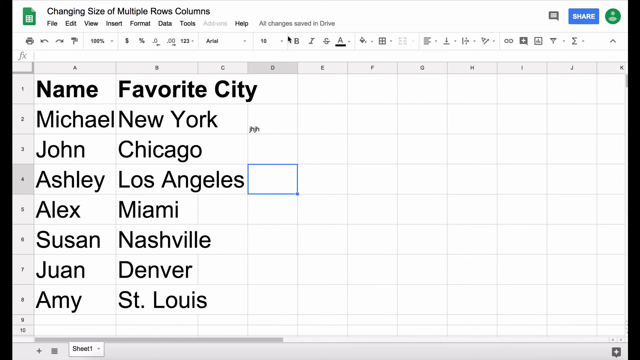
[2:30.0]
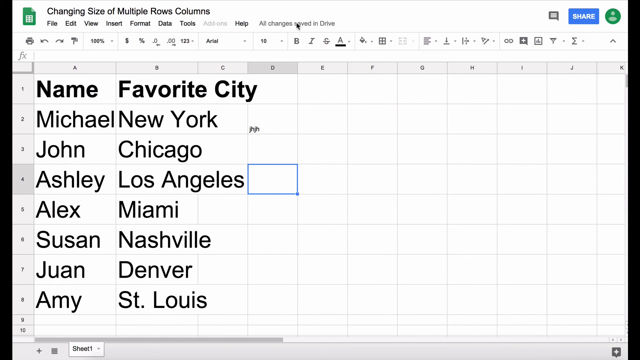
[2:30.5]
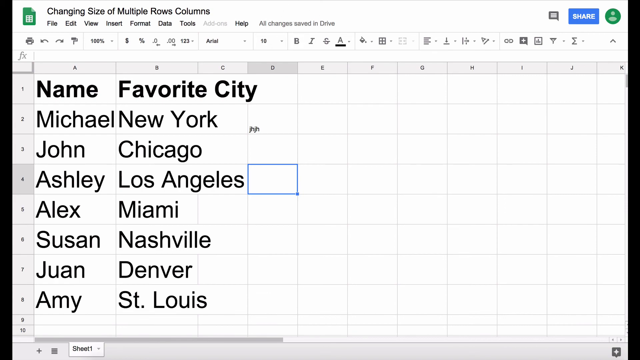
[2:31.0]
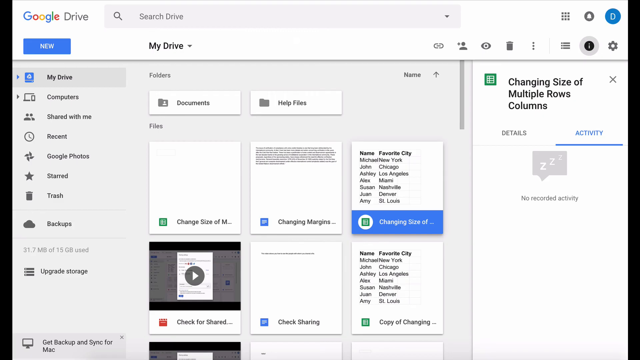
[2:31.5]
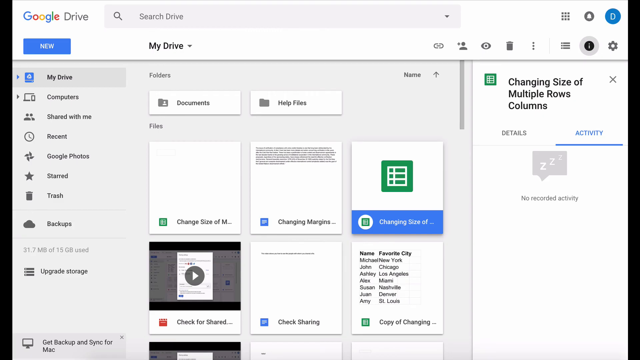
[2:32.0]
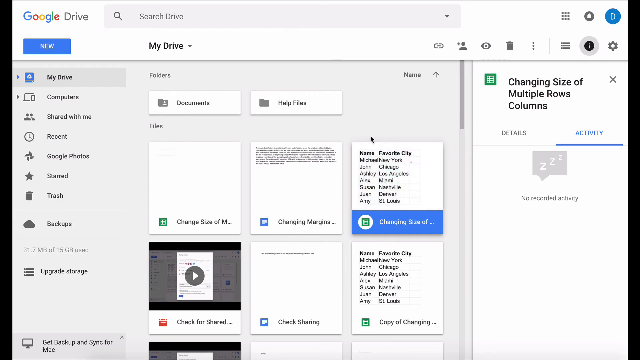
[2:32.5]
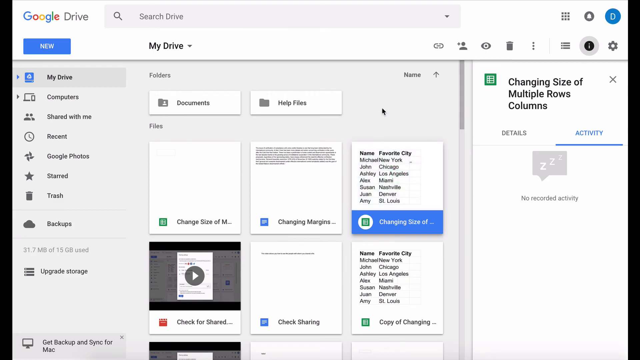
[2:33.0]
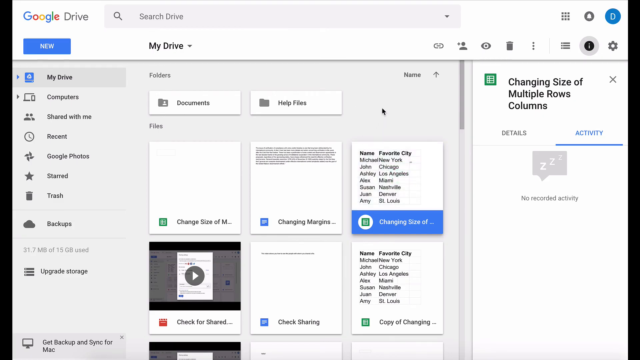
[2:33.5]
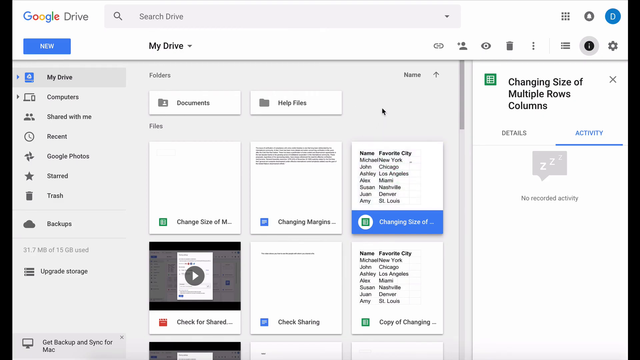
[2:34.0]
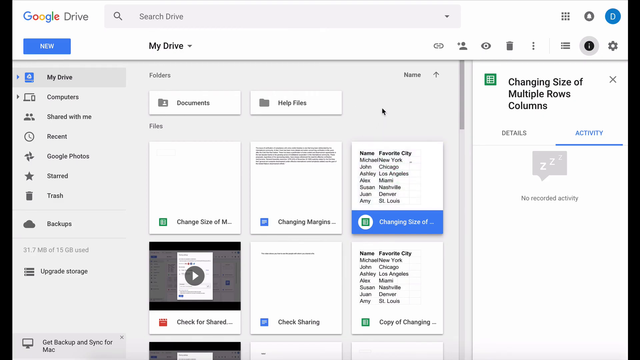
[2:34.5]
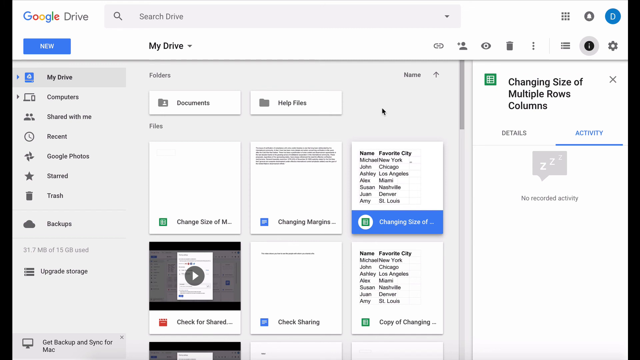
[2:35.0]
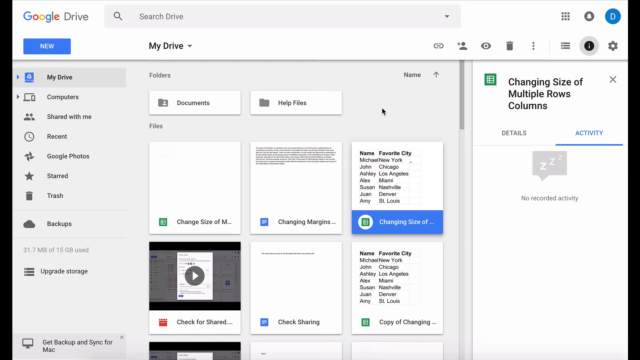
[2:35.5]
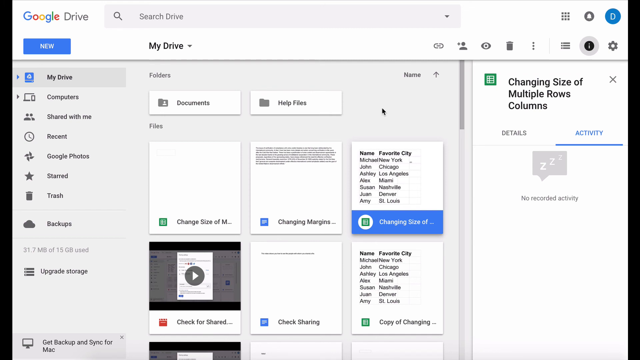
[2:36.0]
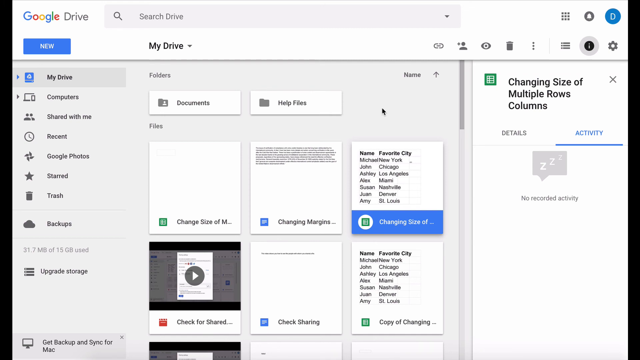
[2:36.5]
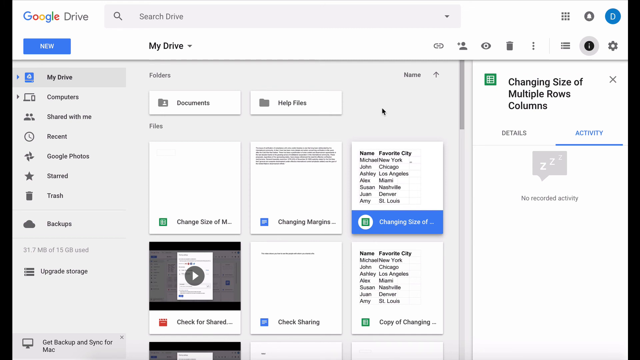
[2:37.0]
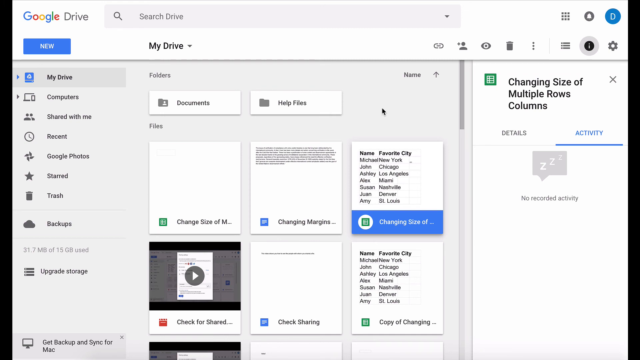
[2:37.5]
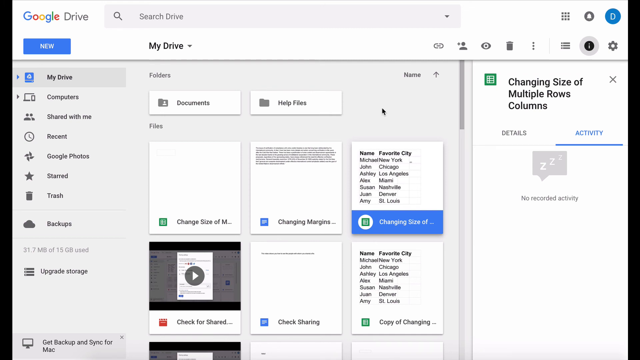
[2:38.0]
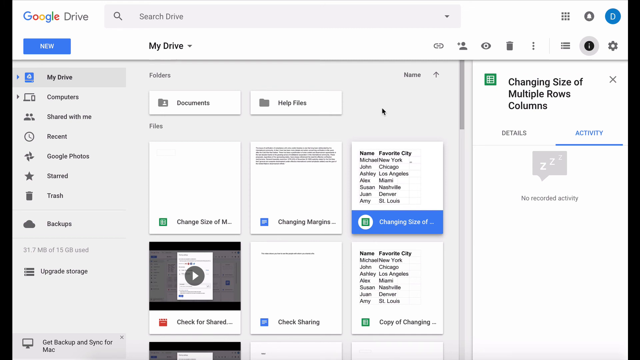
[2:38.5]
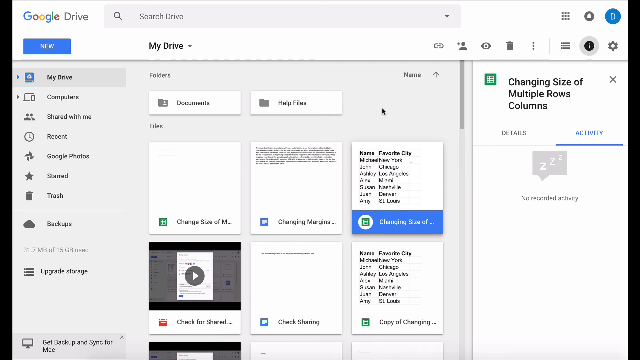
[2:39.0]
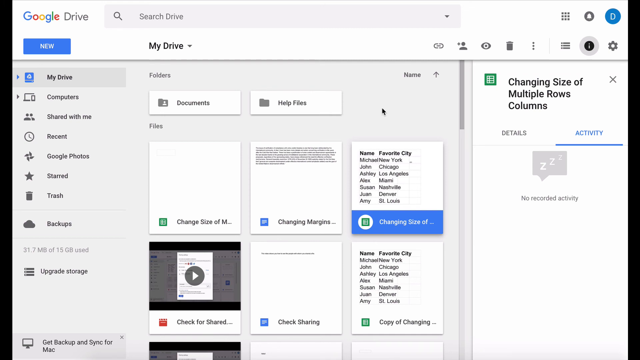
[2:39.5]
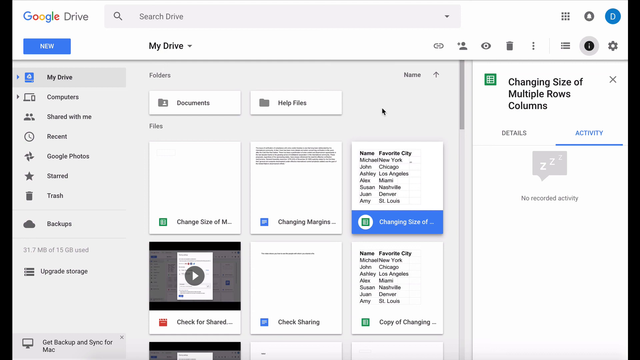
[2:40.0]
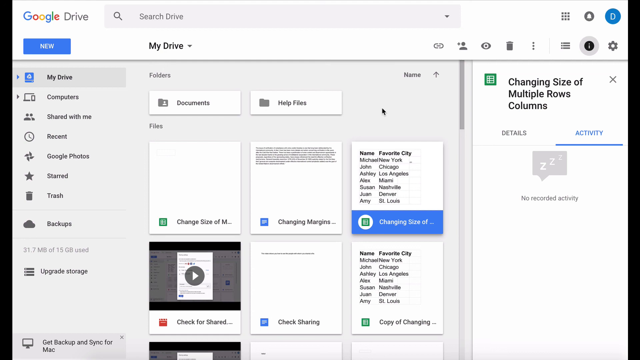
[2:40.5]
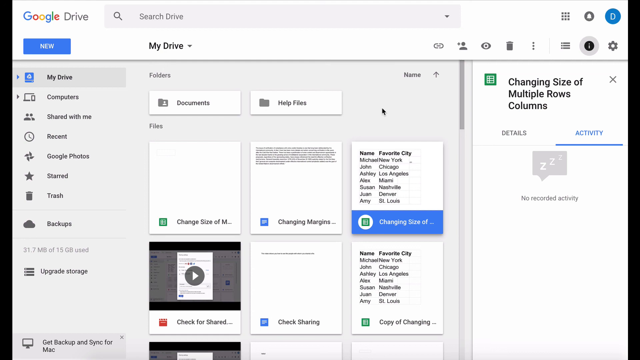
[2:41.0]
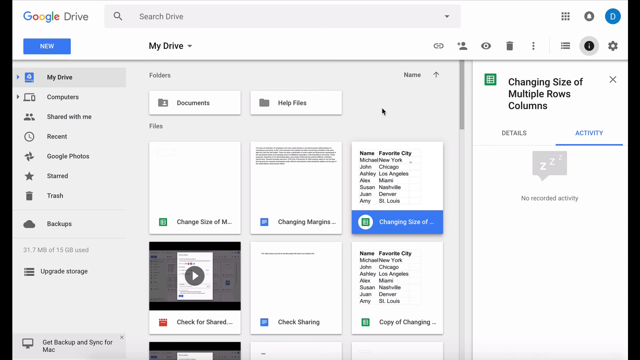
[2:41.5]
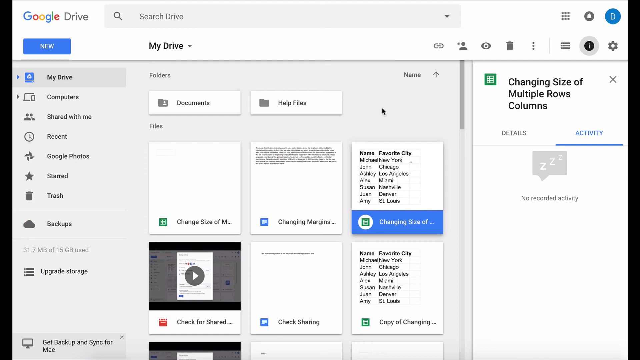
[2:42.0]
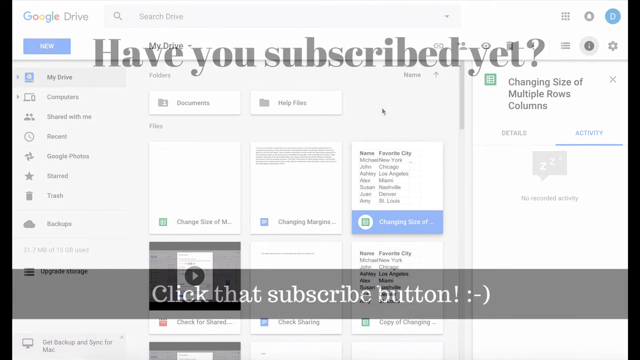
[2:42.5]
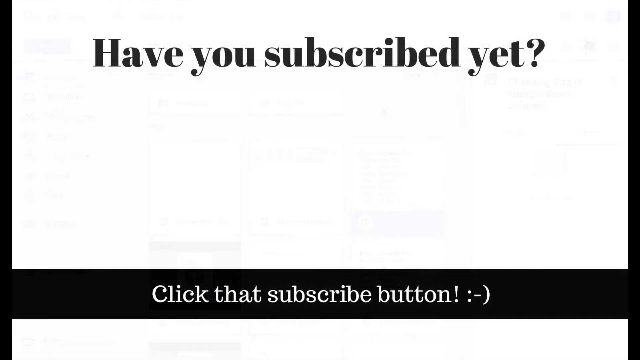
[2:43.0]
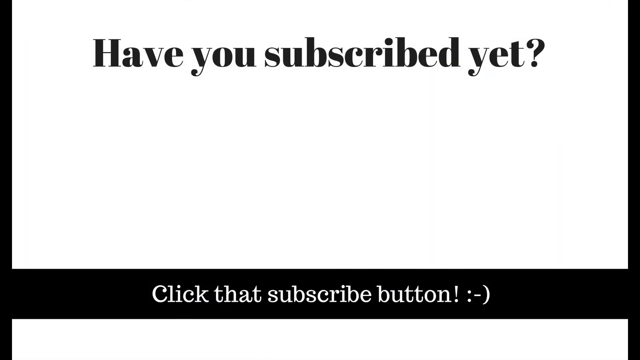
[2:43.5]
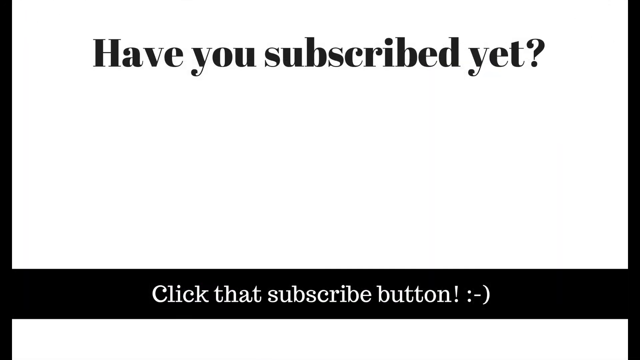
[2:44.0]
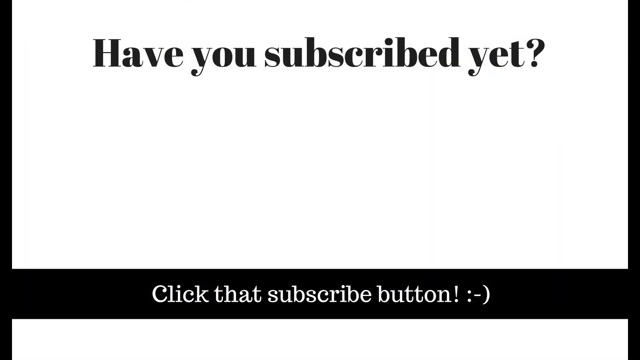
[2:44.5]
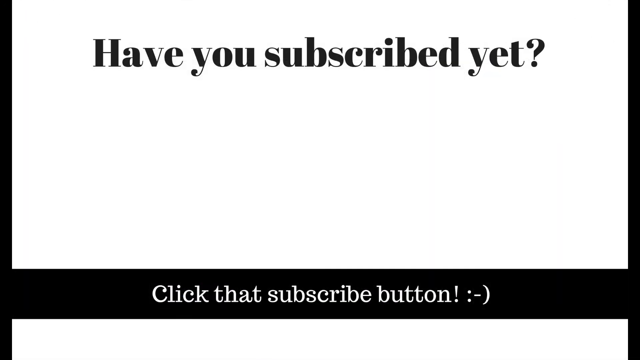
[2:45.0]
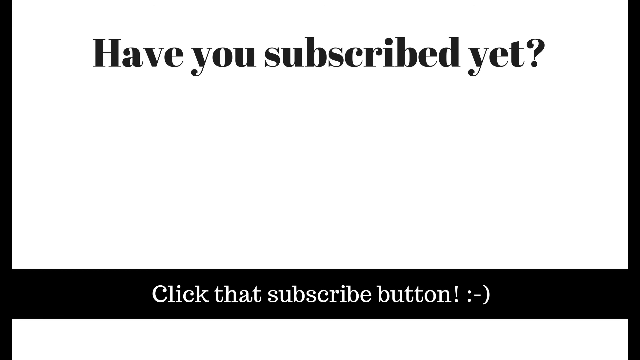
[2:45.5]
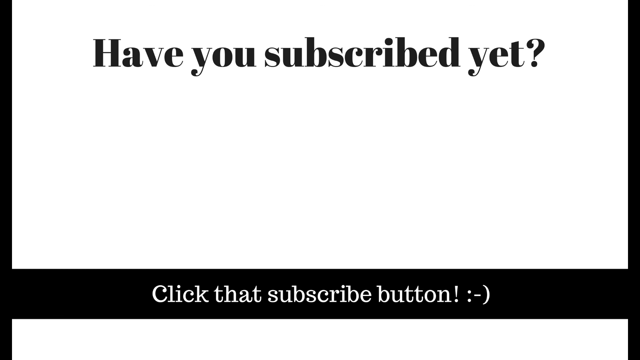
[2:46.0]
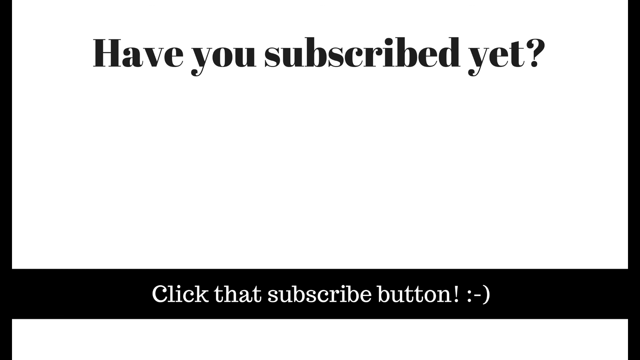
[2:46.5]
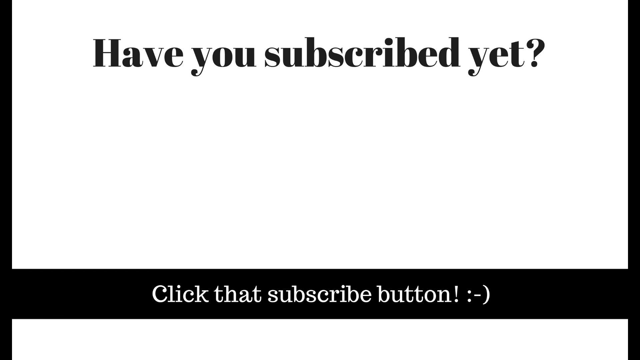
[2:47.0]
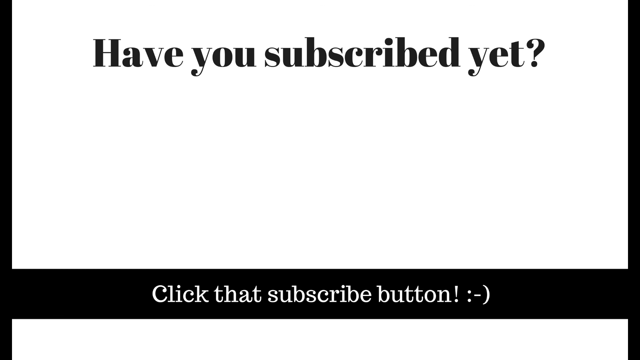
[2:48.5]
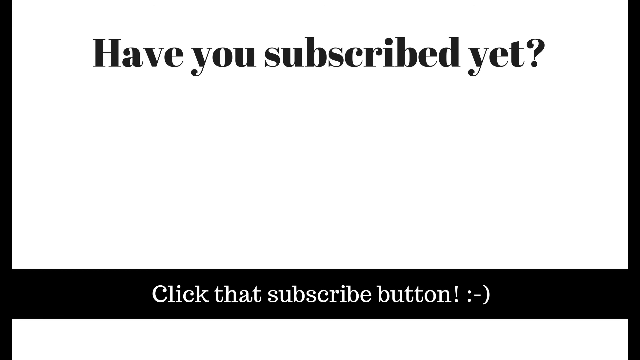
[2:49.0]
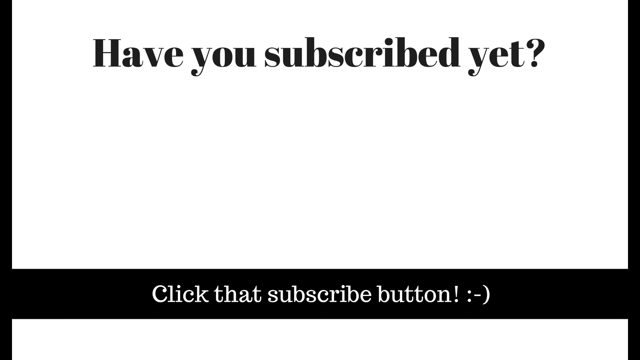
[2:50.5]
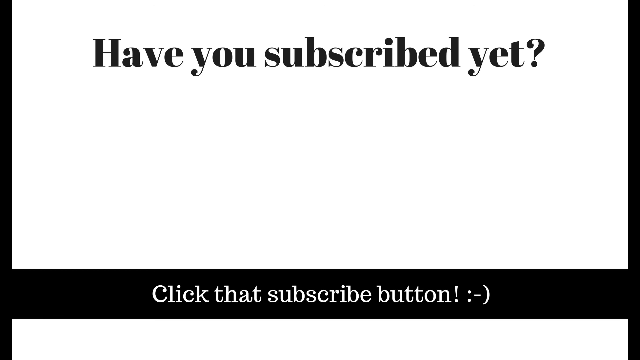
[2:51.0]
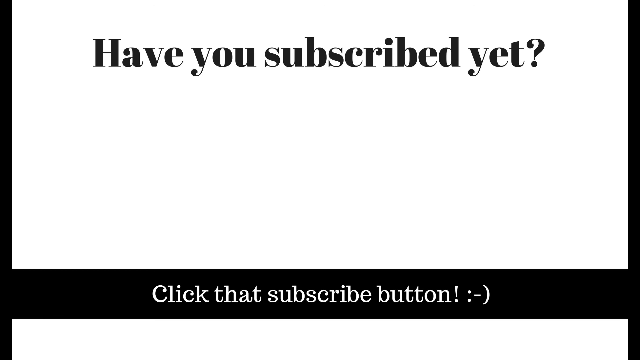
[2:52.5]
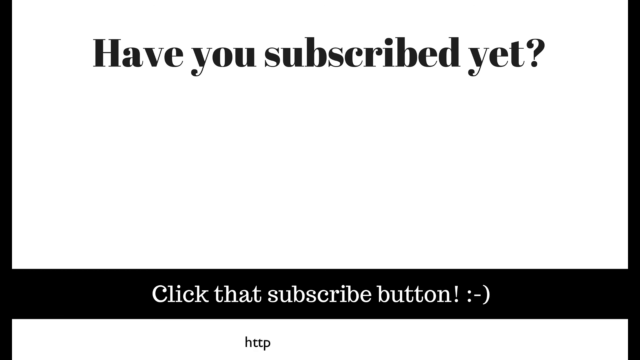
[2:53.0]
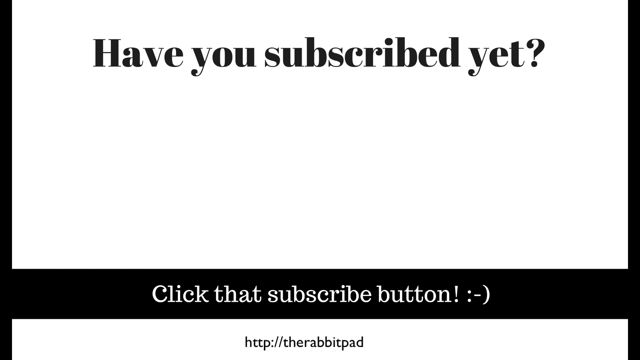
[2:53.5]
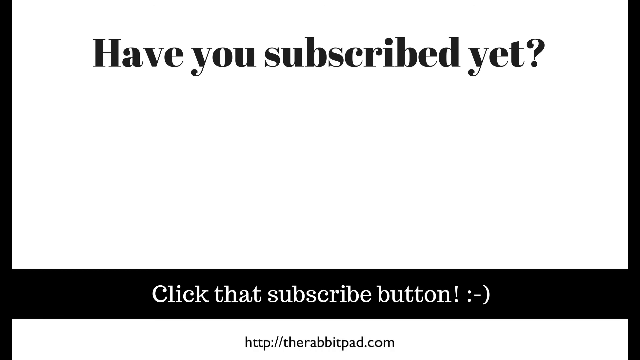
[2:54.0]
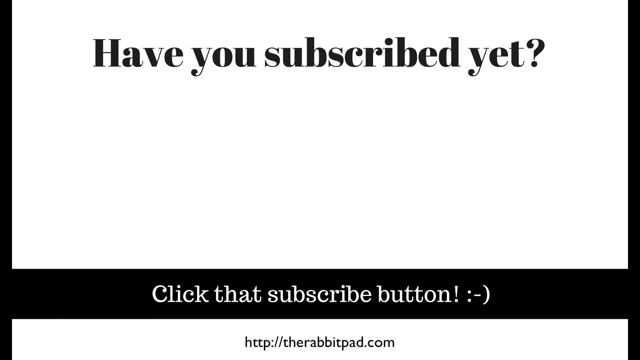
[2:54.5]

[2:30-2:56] A data entry area on a program or website is shown. At the top left is "changing size of multiple rows, columns", and below it the menu "File", "Edit", "View", "Insert", "Format", "Data", "Tools", a grayed-out item that is possibly "Add-ons", and "Help" in black letters, with "All changes saved in Drive" next to that. The data entry area has "Name" and "Favorite city", with Michael, New York; John, Chicago; Ashley, Los Angeles; Alex, Miami; Susan, Nashville; Juan, Denver; Amy, St. Louis below. At the top right is "Share" in blue. The user switches to another screen with "Google Drive" at the top left and, in the middle of the top next to it, a search bar reading "Search drive" with a magnifying glass icon. At the top right is a blue circle with a white letter D in it, which probably stands for the user. Below Google Drive are "New", "My Drive", "Computer", "Shared with me", "Recent", "Google Photos", "Starred", "Trash", "Backups" and "Upgrade storage".